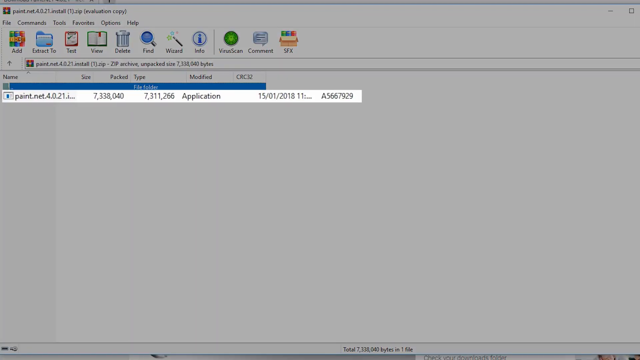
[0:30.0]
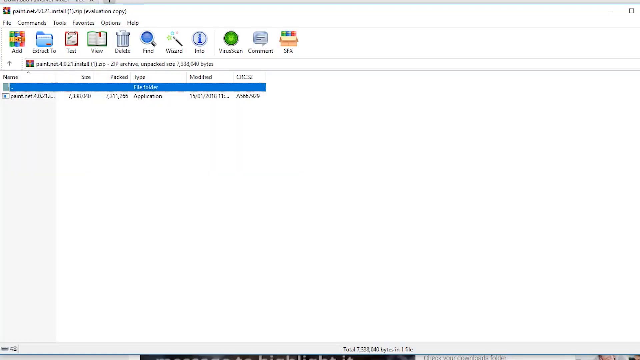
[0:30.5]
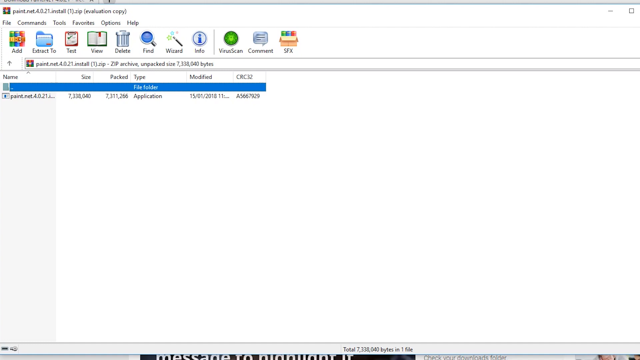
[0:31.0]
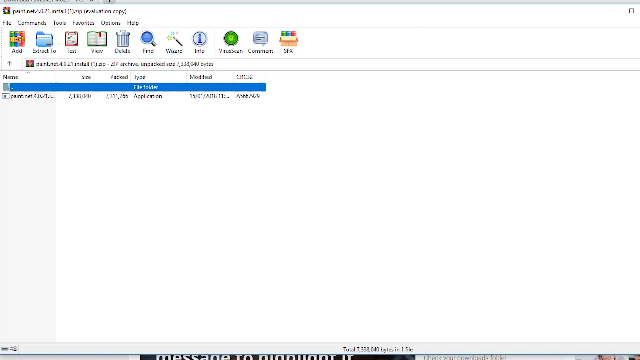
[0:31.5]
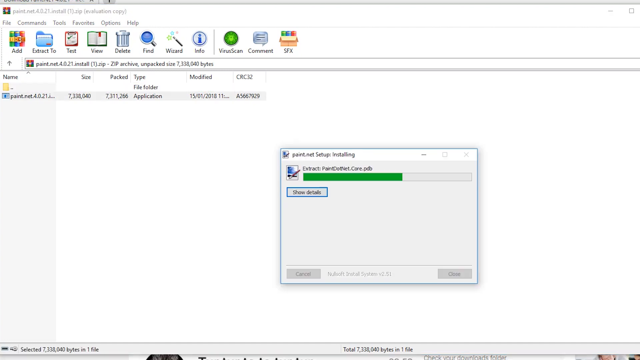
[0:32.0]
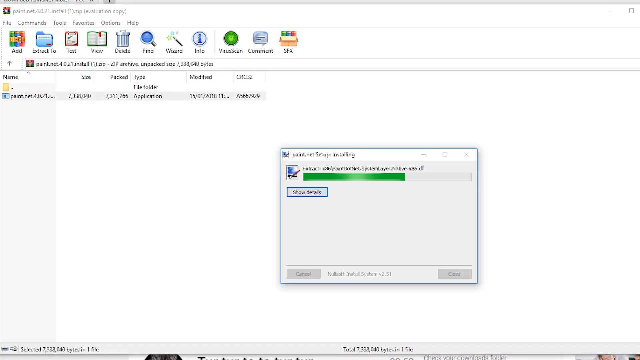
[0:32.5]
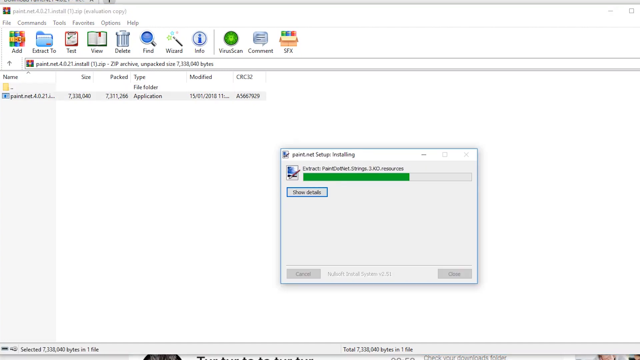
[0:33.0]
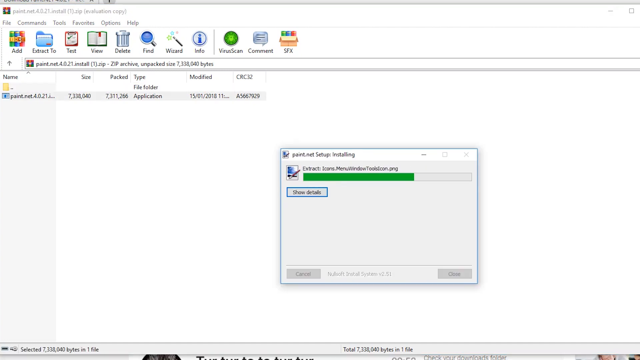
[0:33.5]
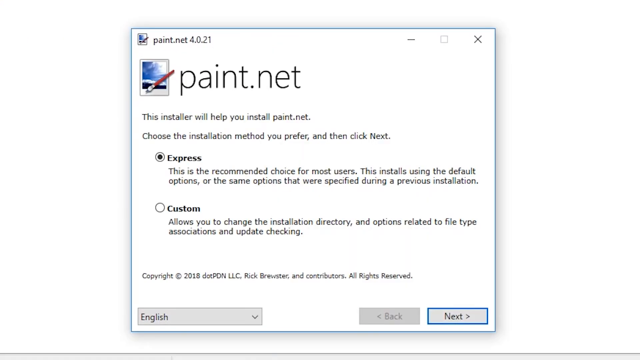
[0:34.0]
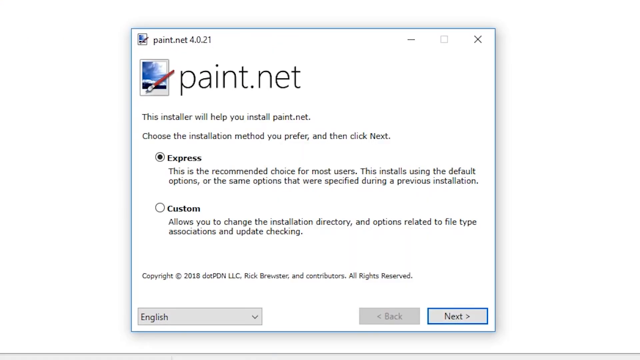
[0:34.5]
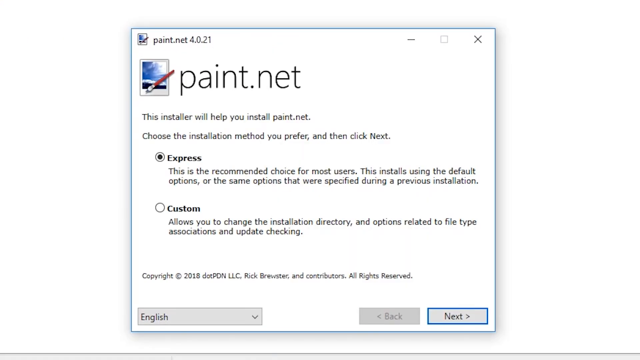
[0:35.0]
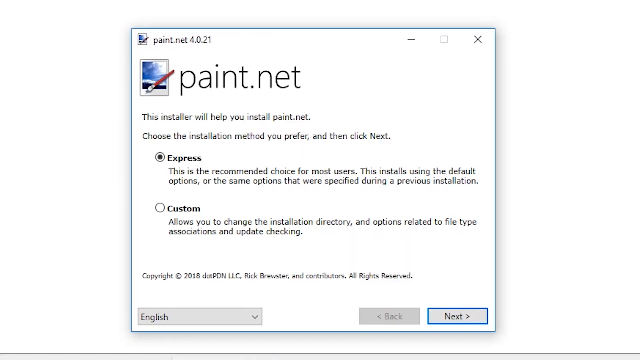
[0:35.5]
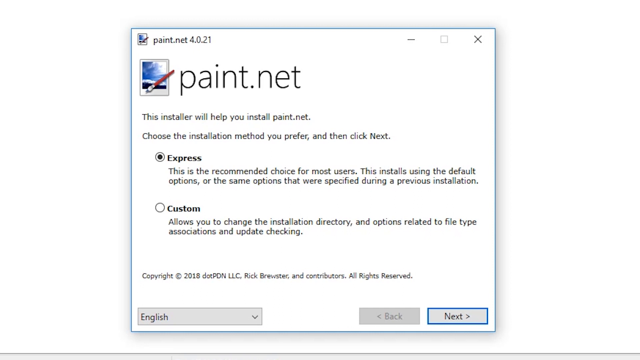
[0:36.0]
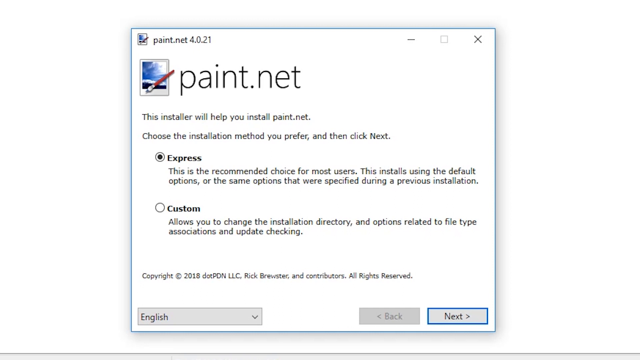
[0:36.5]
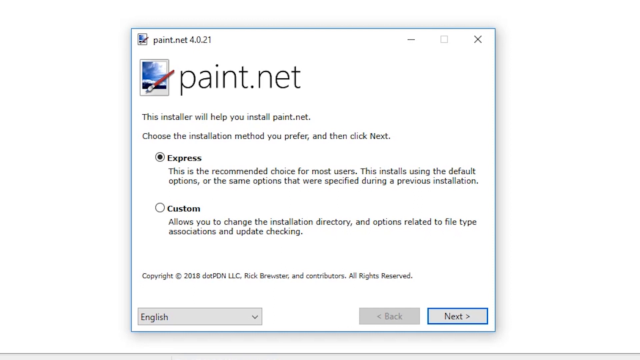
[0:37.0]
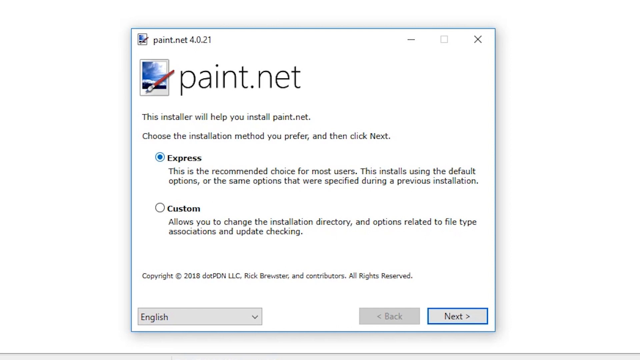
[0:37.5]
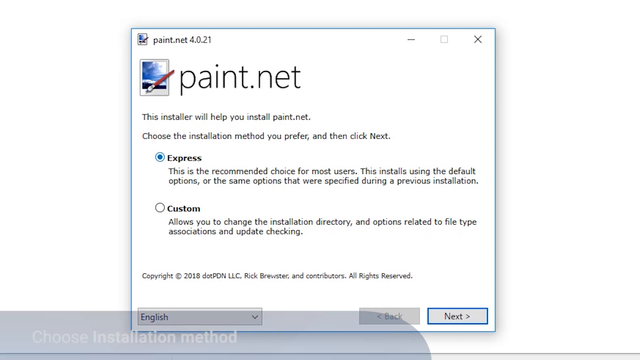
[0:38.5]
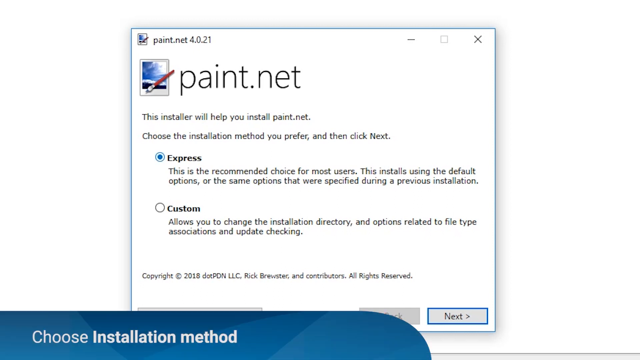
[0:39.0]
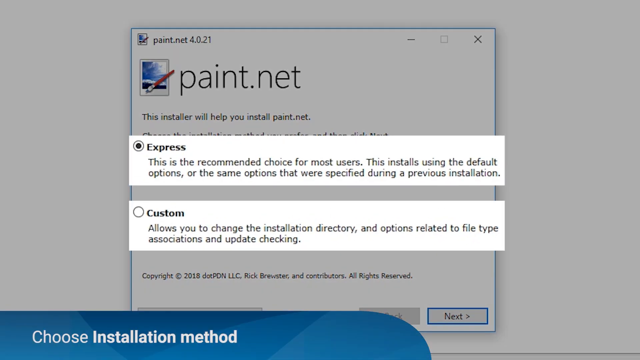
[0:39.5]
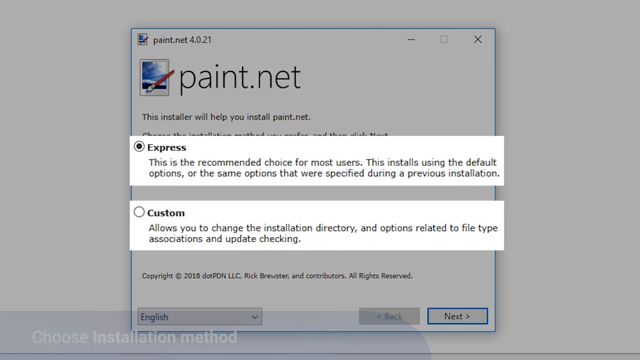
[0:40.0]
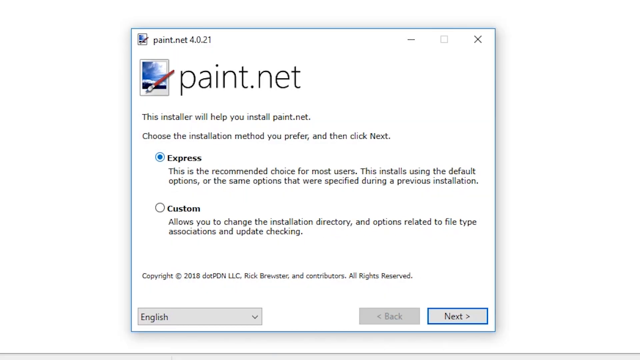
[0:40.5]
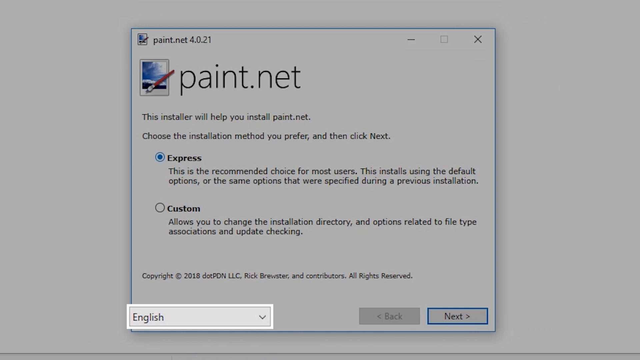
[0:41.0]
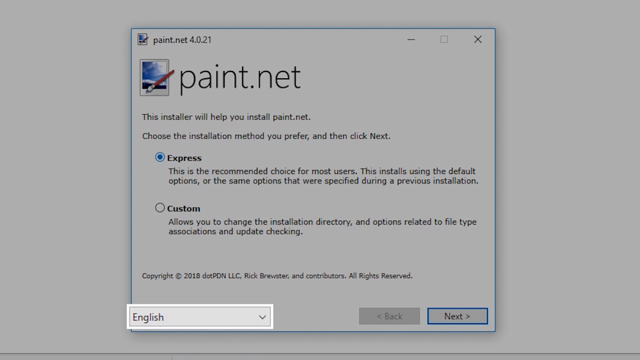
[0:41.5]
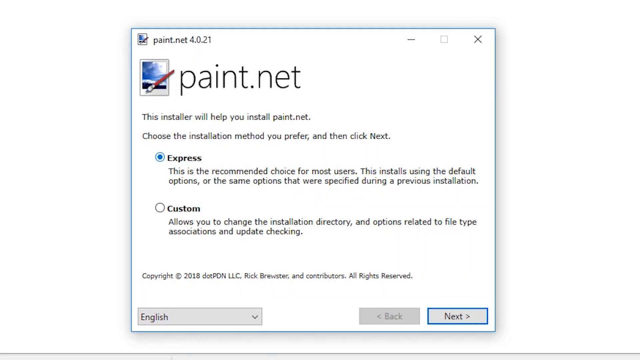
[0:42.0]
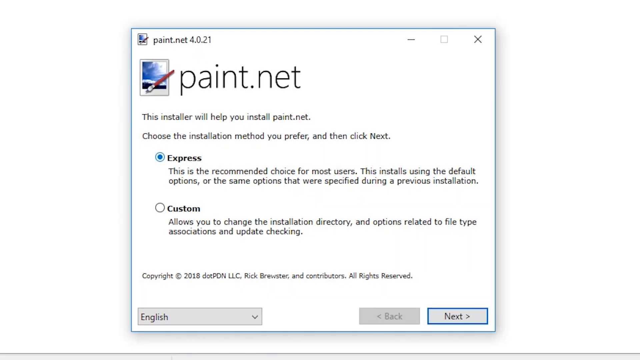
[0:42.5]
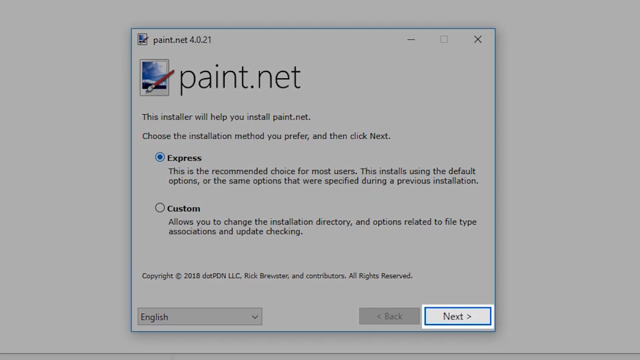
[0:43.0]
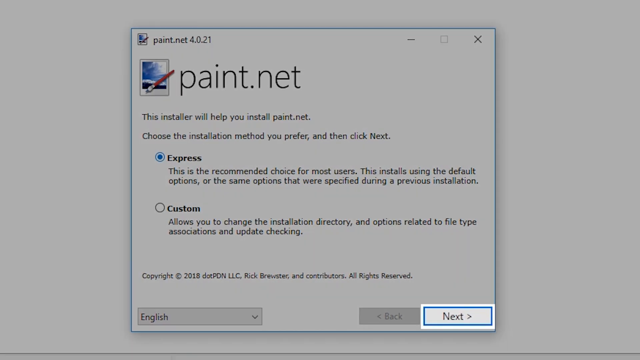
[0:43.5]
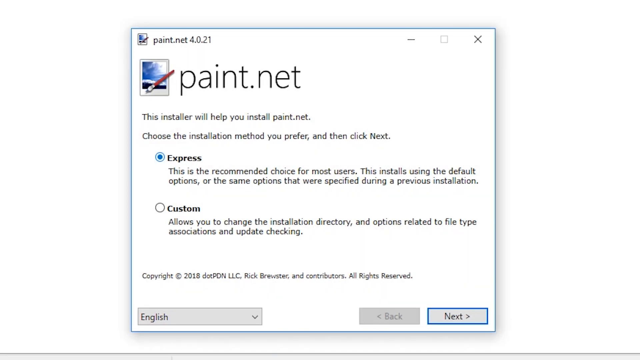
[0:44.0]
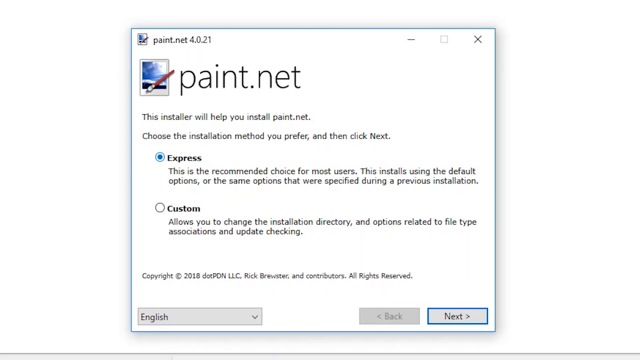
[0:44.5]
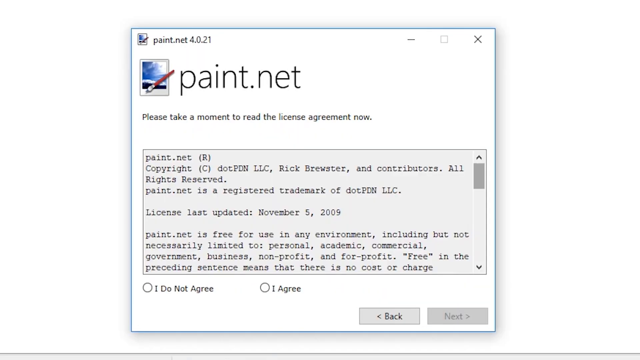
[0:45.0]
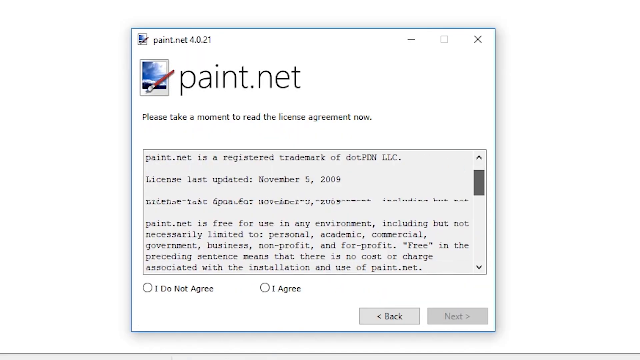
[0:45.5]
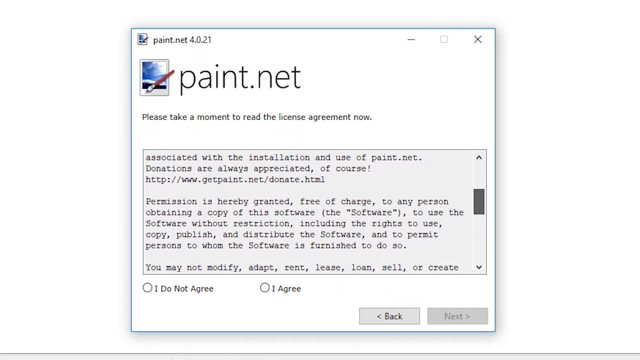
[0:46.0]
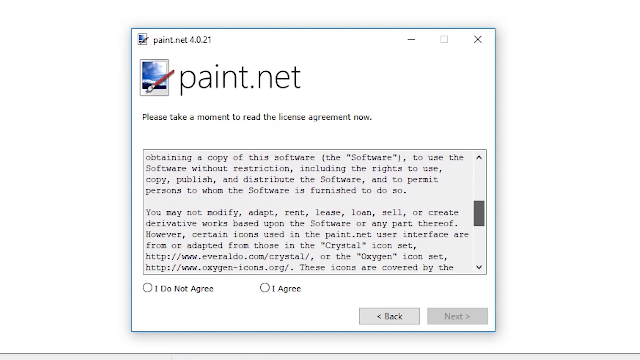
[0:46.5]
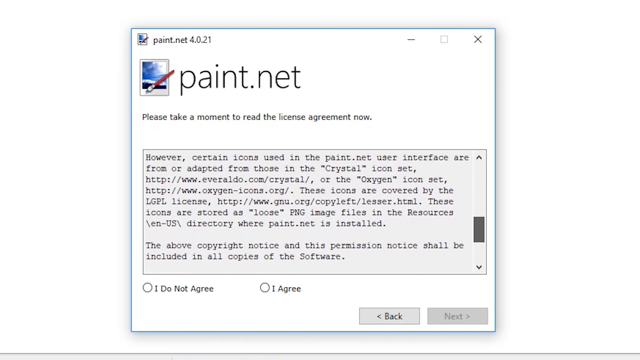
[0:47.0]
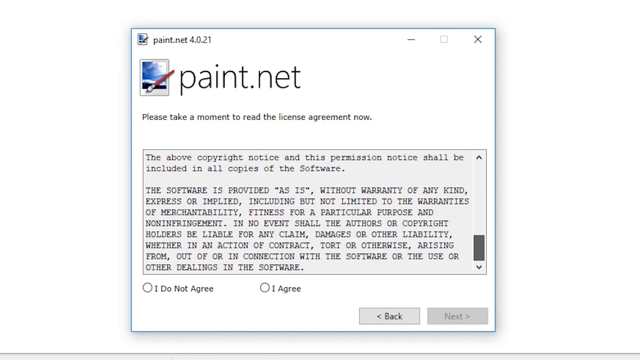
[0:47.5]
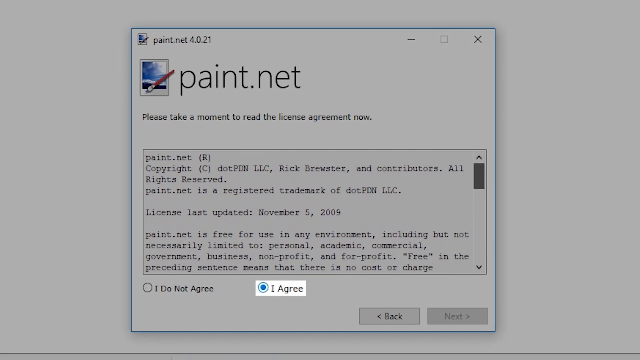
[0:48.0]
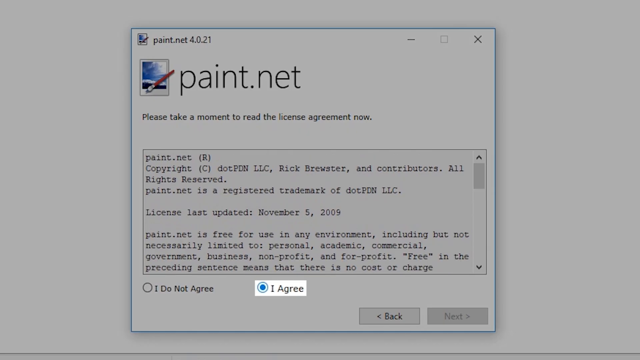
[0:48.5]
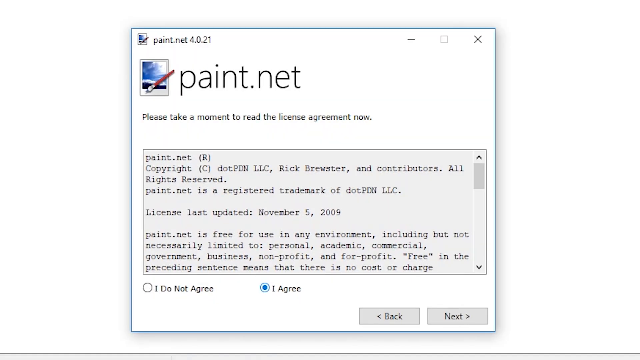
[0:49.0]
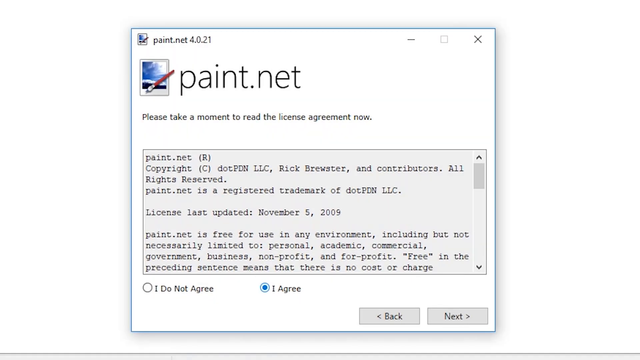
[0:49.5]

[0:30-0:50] The paint.net application inside the zip folder application is highlighted and slightly enlarged, then the enlarged part of the screenshot animates back to its normal size. A new window appears, apparently extracting the application from the zip folder; it has a green progress bar and a grey button reading "show details" with a blue border, and lots of text changes quickly as the progress bar advances. An installation screen for paint.net then appears with two choices, Express or custom. A larger paint.net icon is visible: a red paintbrush with a white tip on top of what looks like a photograph with a white bezel, slightly bigger at the bottom, apparently showing some kind of sky with black ground beneath. At the bottom of the screen are a back button and an X button, both grey, while the next button is not disabled and has a blue border. To the right of the buttons is a language picker set to English by default. The user highlights the express and custom options by enlarging them slightly, then enlarges the language picker, then highlights the next button. He clicks next, revealing the license agreement, scrolls all the way down, and clicks the I agree radio button, which is then highlighted by enlarging it.